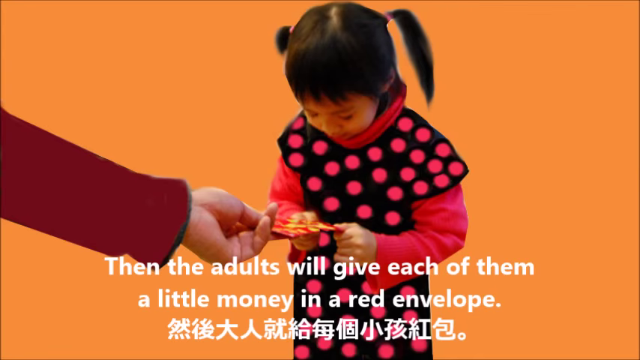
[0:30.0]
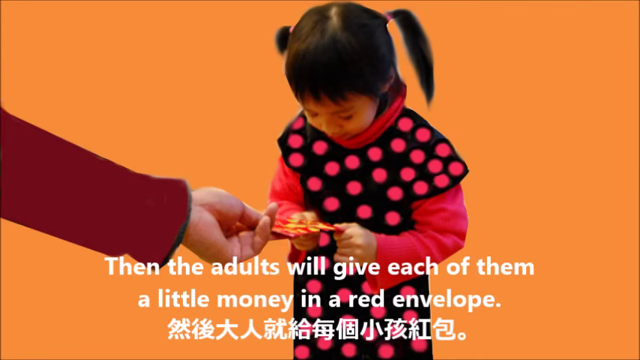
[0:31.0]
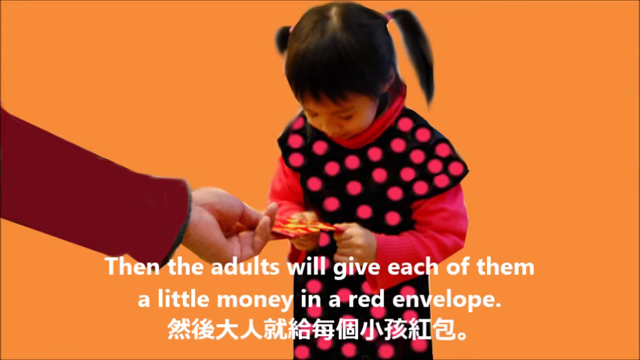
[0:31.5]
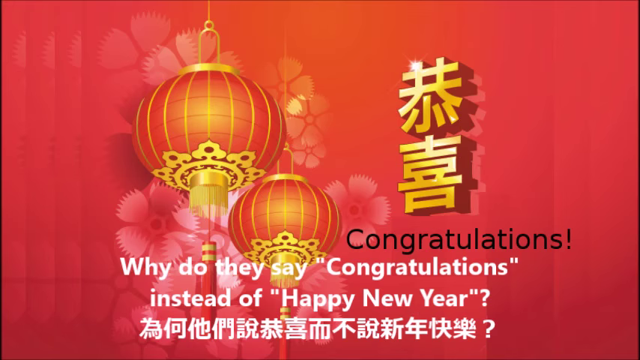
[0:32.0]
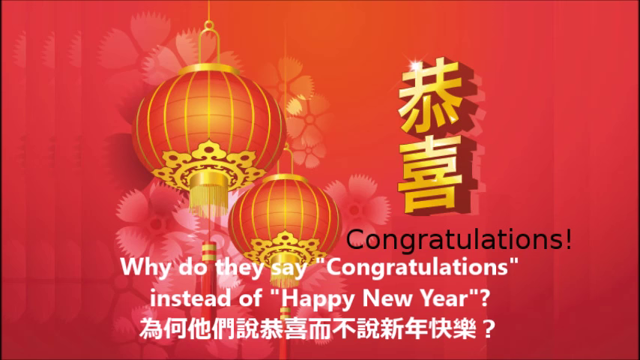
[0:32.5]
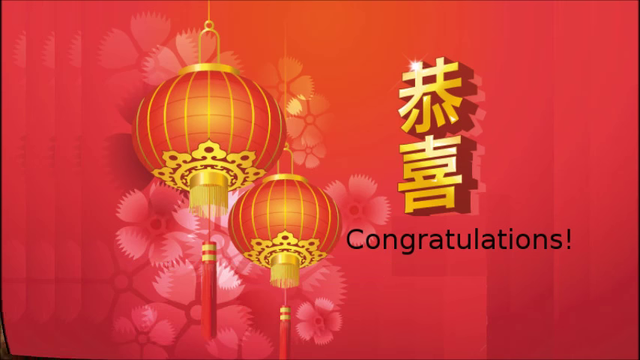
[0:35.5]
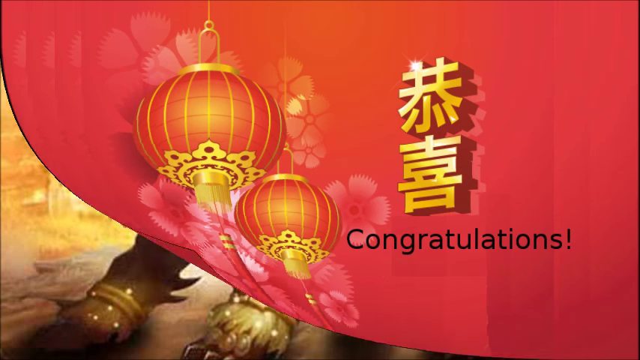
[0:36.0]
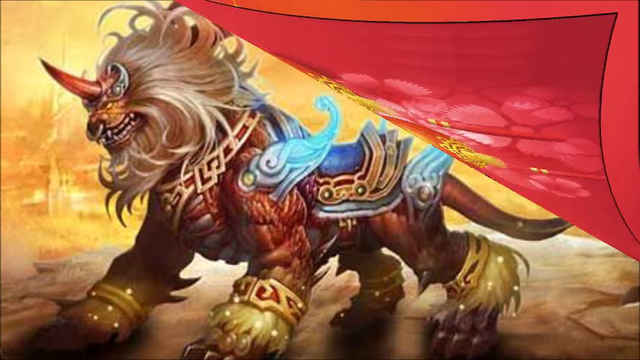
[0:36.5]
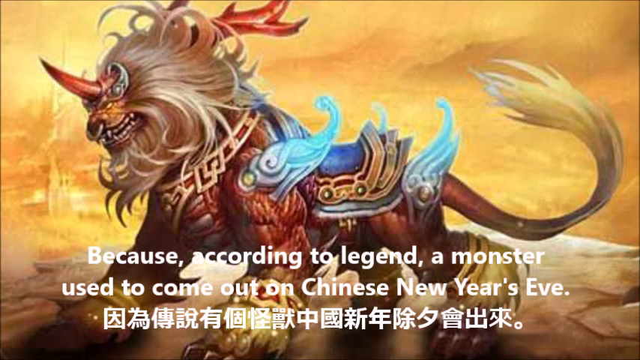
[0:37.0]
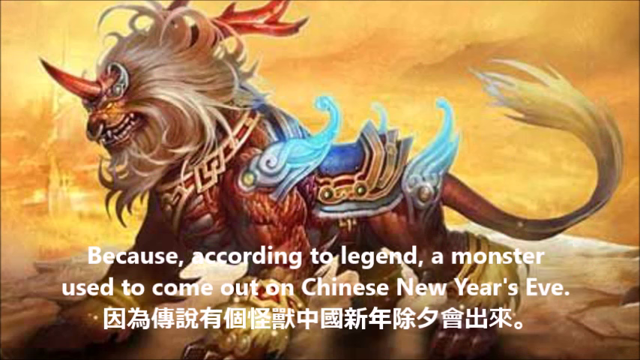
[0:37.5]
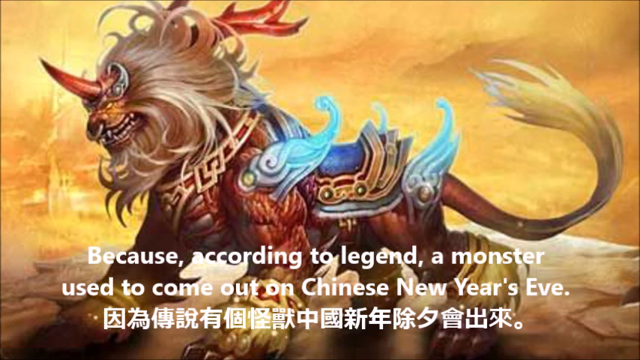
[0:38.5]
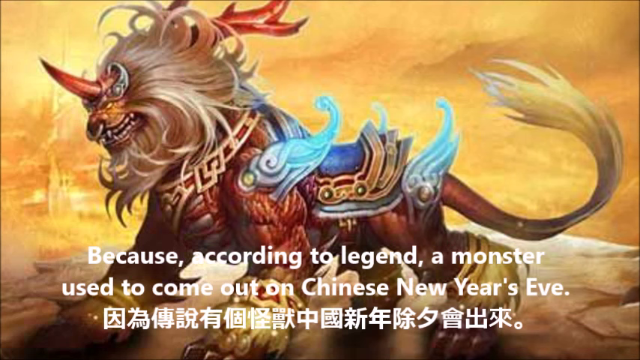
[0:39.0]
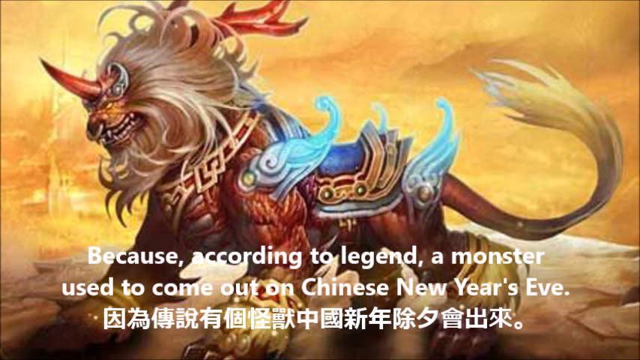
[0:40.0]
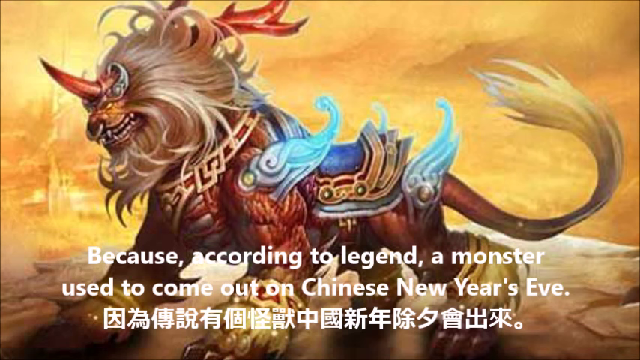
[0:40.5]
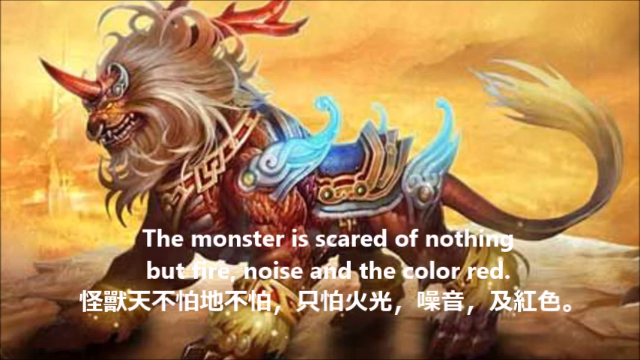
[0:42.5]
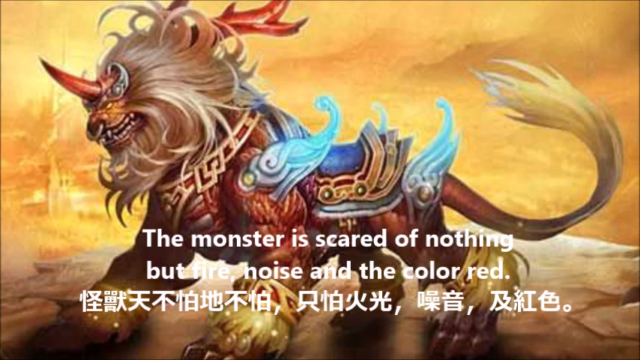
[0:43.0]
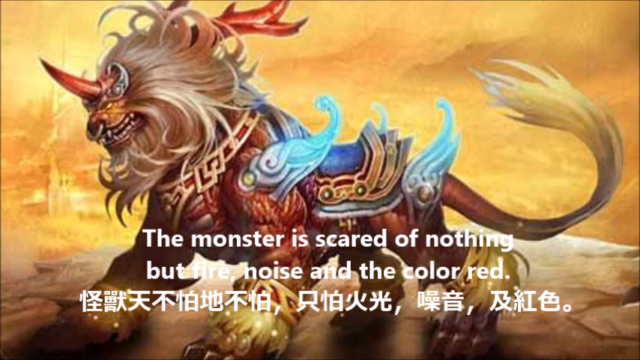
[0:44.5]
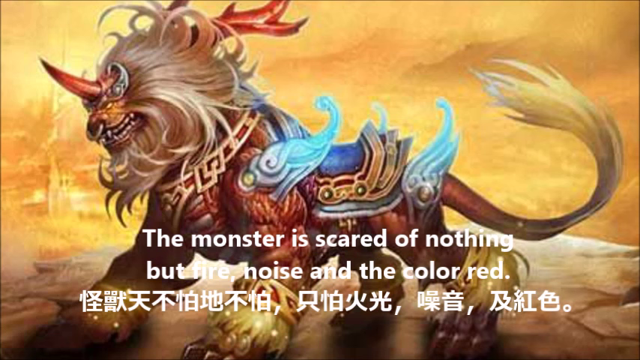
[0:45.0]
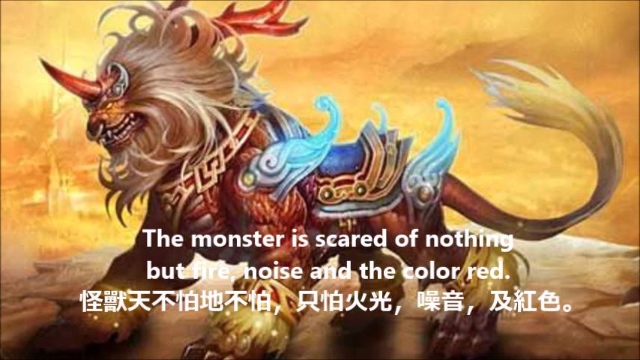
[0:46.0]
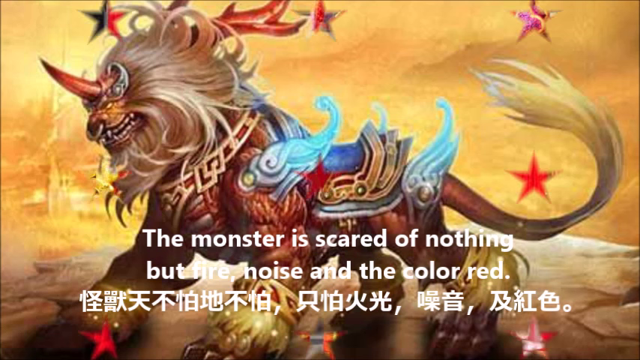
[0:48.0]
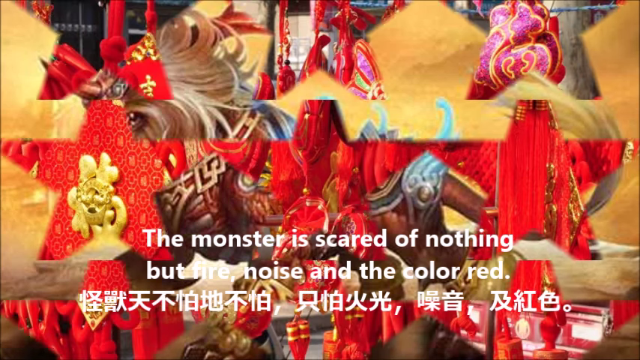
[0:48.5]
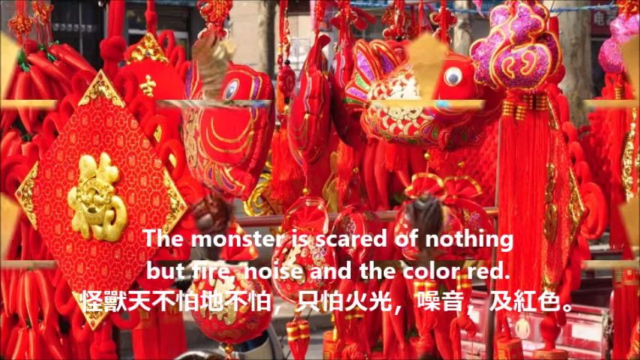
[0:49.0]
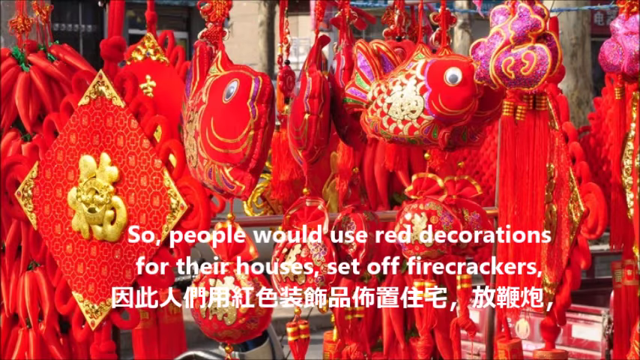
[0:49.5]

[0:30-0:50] White text at the bottom reads "then the adults will give each of them a little money in a red envelope". The image of the child changes to a red background with two Chinese lanterns on the left-hand side, one larger than the other. There are flowers in the background and white and gold on the right-hand side, with "congratulations" in black underneath. At the bottom the text reads "why do they say congratulations instead of happy new year", with more Mandarin text below. The screen slides like a page being turned from the bottom left to the top right corner, and the page disappears to reveal an illustration of a monster. It looks like a four-legged animal with a very long tail, and it has a scary-looking face with a ring in its nose and a horn at the front of its head. White text at the bottom reads "because according to legend, a monster used to come out on Chinese New Year. The monster is scared of nothing but fire, noise, and the colour red". Red stars then appear on the screen and fade into a new image.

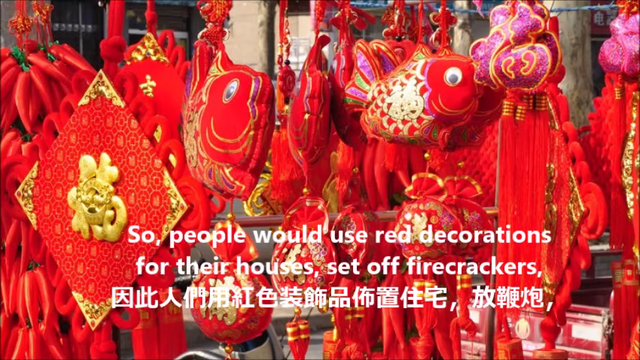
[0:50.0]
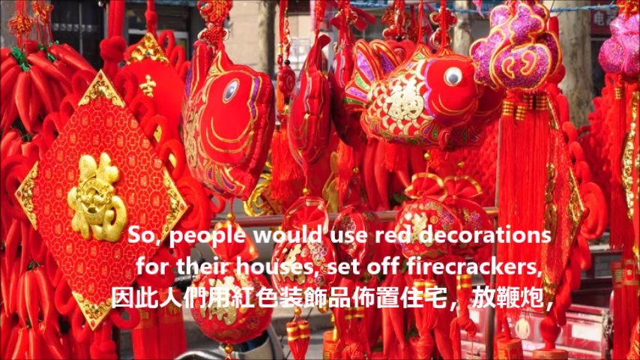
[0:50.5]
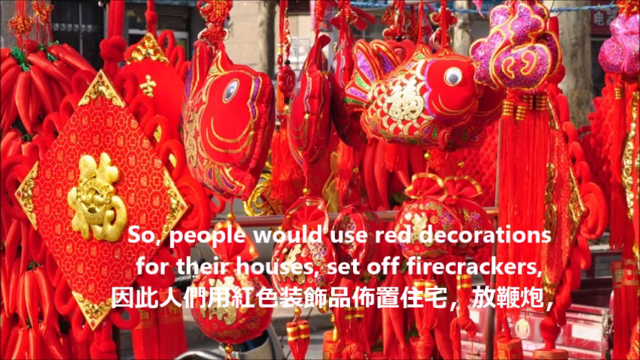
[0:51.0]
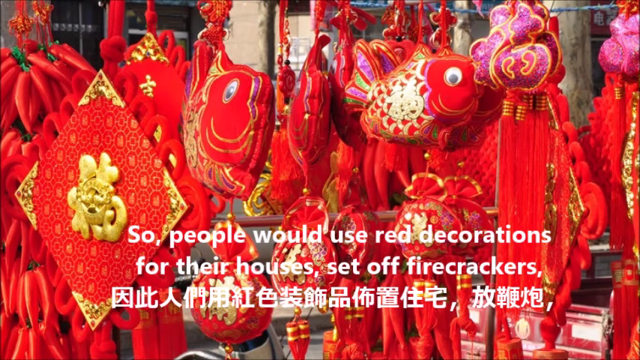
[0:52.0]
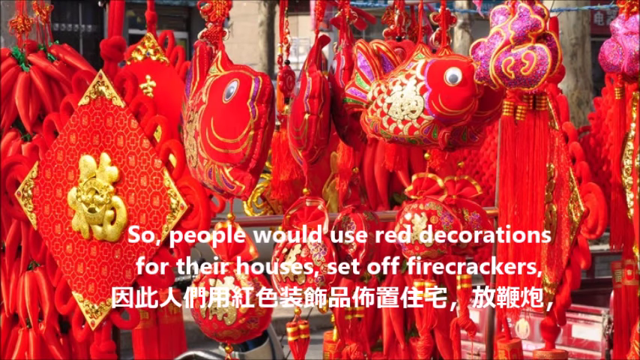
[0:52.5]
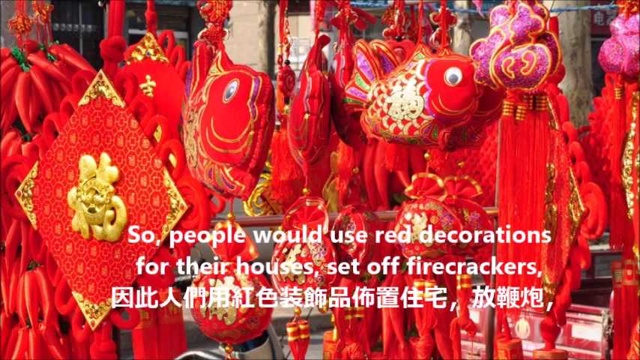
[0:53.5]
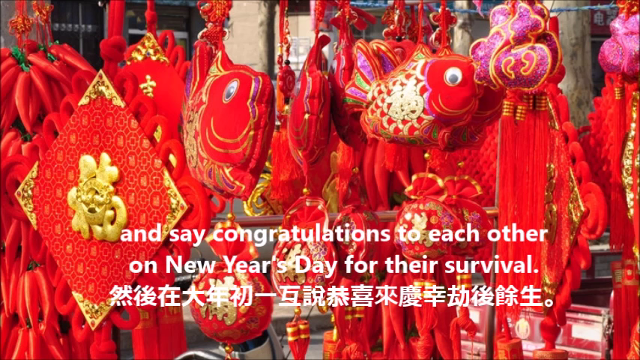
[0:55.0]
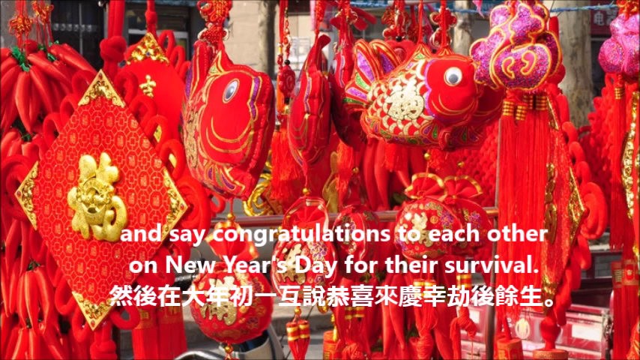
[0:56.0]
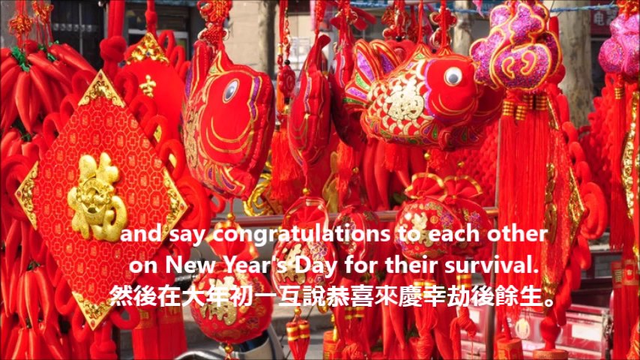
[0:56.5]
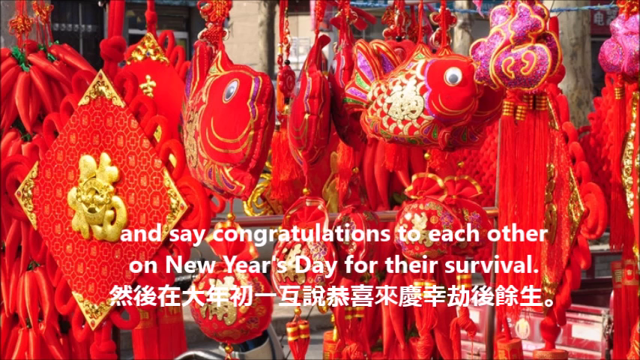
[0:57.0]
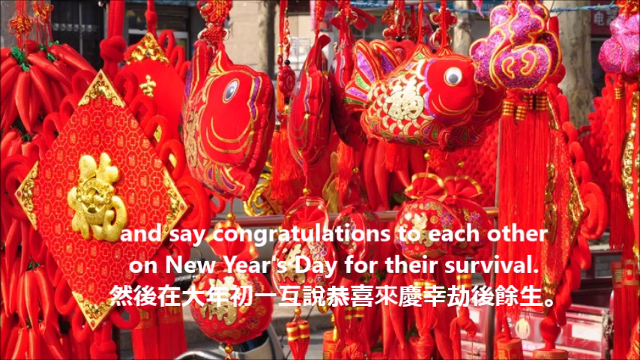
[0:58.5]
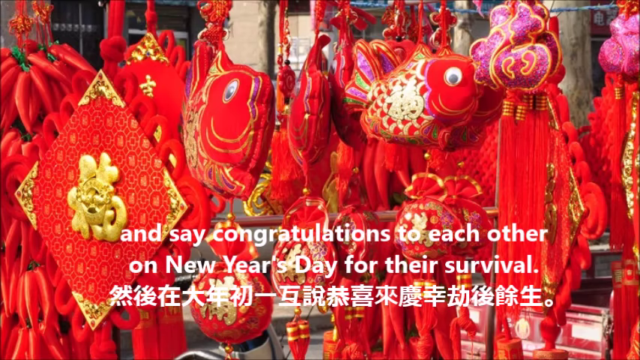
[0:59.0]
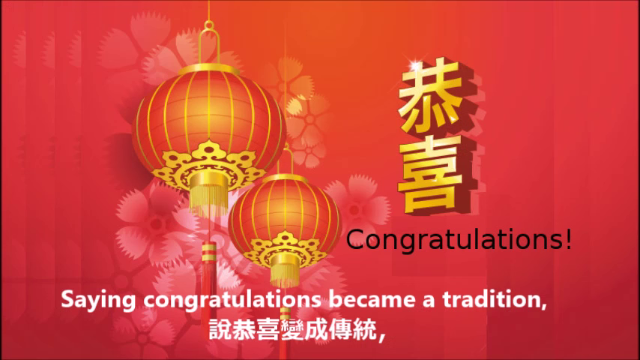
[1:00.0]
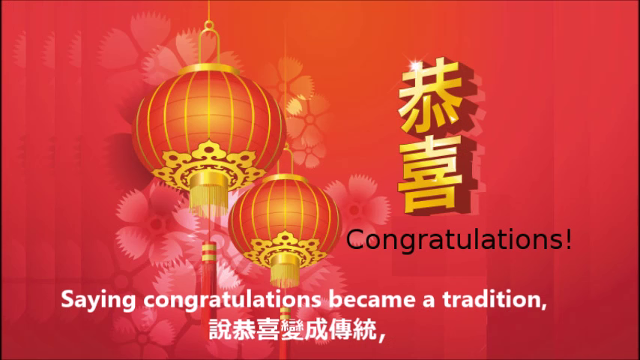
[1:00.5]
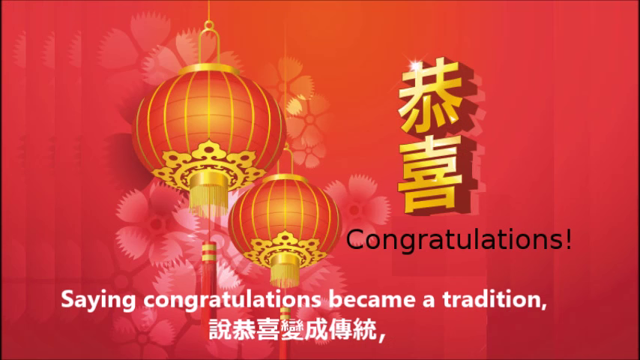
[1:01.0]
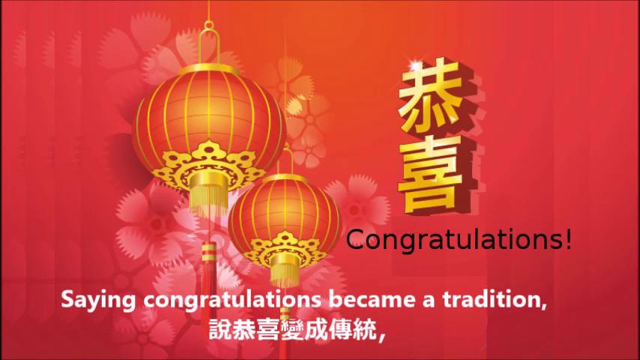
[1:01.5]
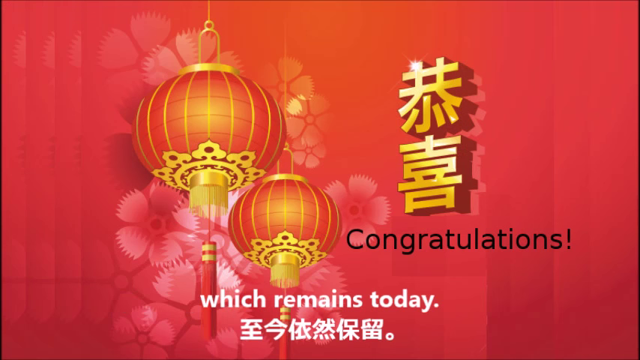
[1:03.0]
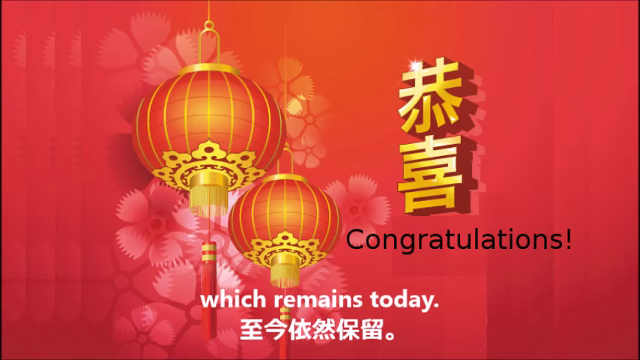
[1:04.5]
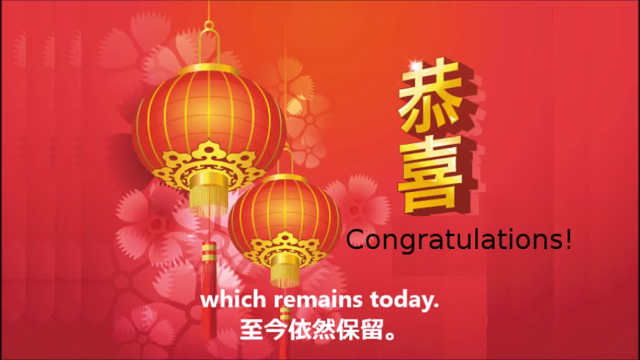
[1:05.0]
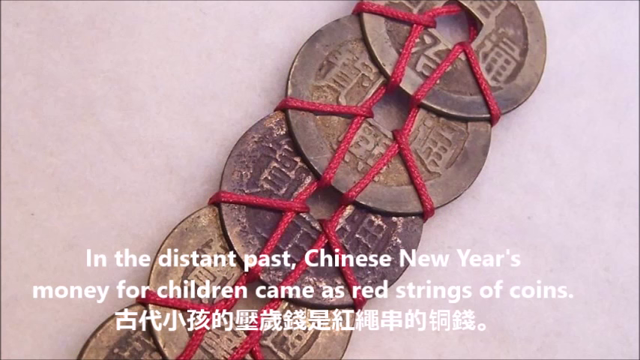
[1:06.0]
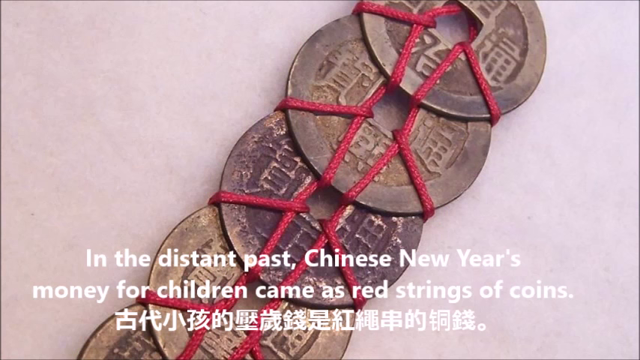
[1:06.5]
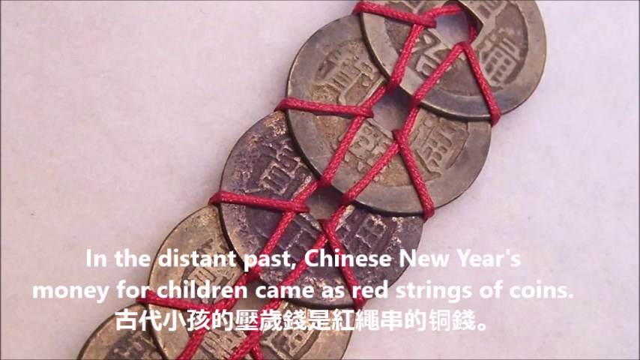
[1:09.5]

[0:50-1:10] An image of multiple red animals and costume appears, with a red diamond shape with a gold emblem in the middle on the left-hand side. The text reads "so people would use red decorations for their houses, set off firecrackers, and say congratulations to each other on New Year's Day for their survival", and red decorations are visible in the background. The red screen appears again with two Chinese lanterns on the left and text on the right that says congratulations in Mandarin. White text at the bottom describes saying congratulations as "a tradition which remains today". Some coins then appear, joined together with red string through the holes in their middles. White text reads "in the distant past, Chinese New Year's money for children came as red strings of coins".